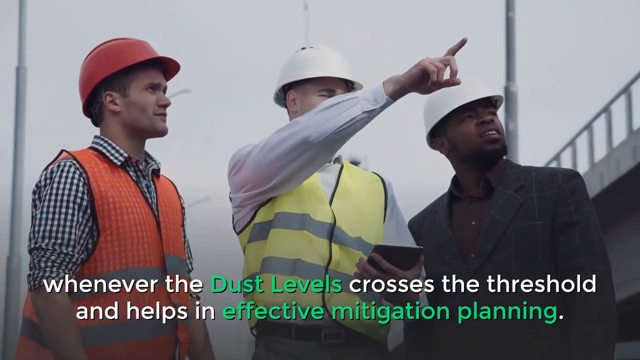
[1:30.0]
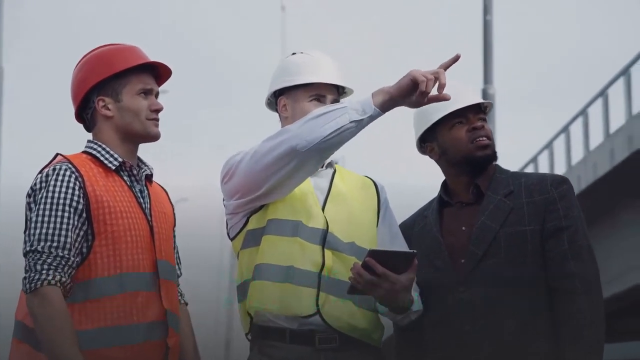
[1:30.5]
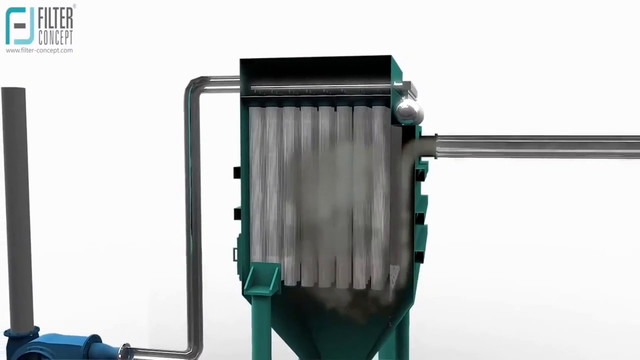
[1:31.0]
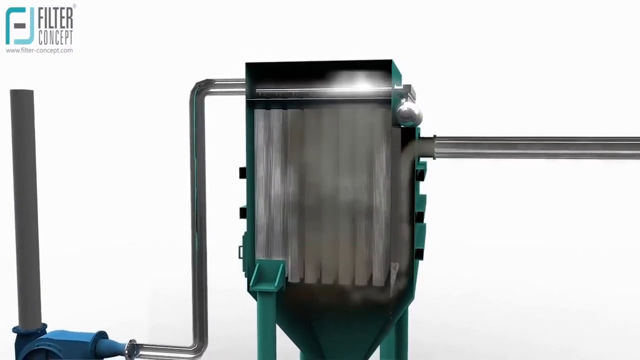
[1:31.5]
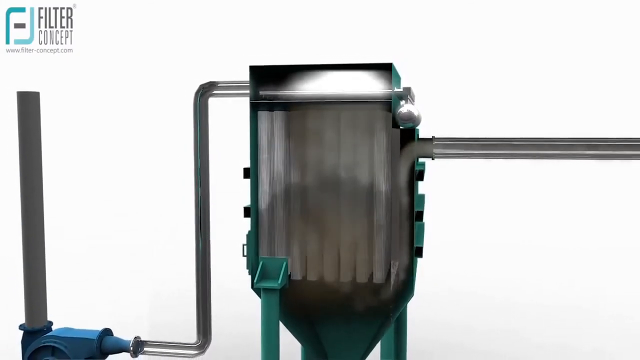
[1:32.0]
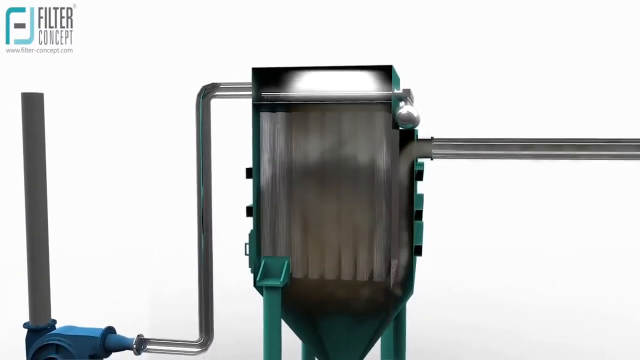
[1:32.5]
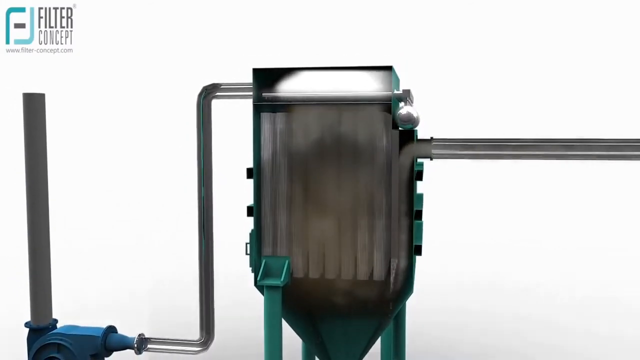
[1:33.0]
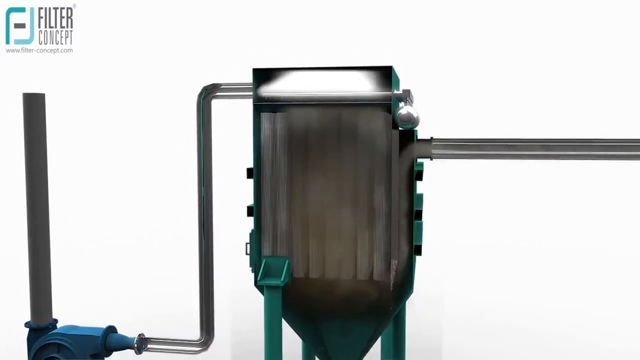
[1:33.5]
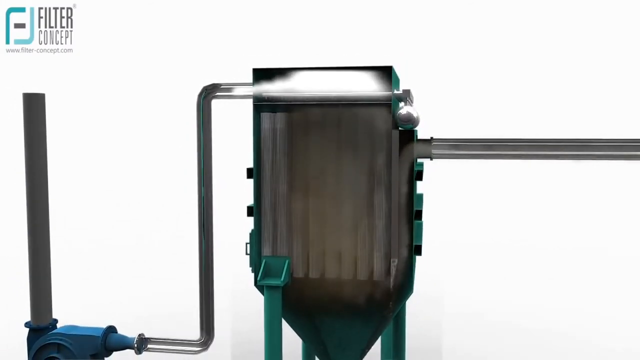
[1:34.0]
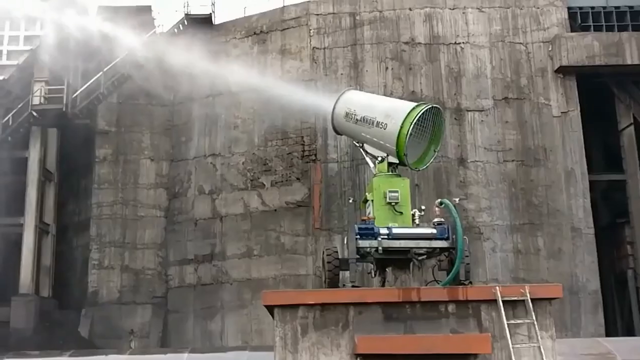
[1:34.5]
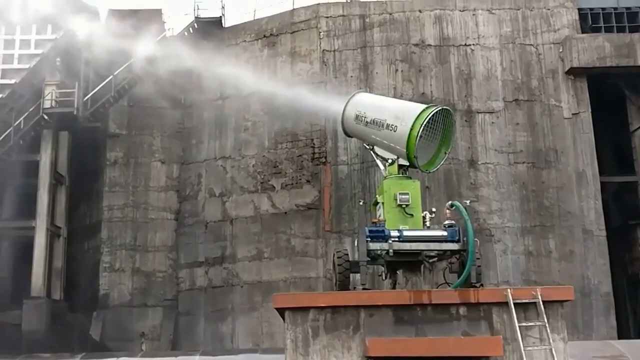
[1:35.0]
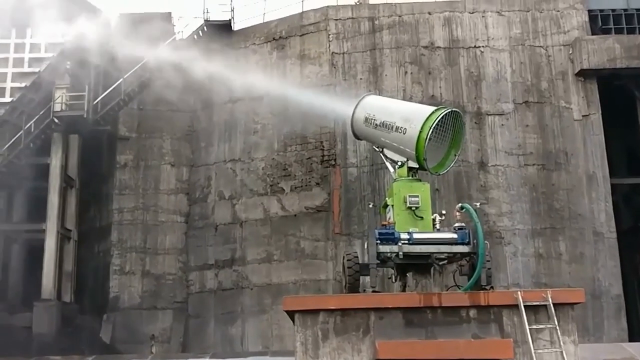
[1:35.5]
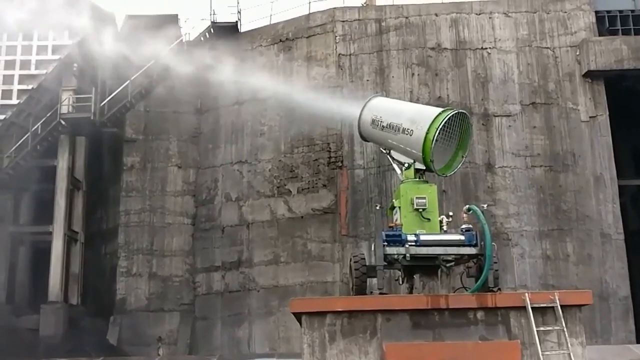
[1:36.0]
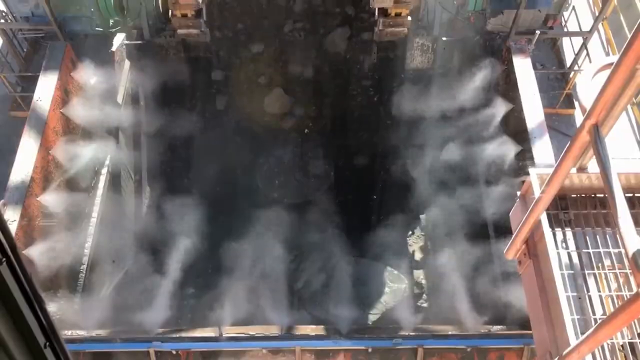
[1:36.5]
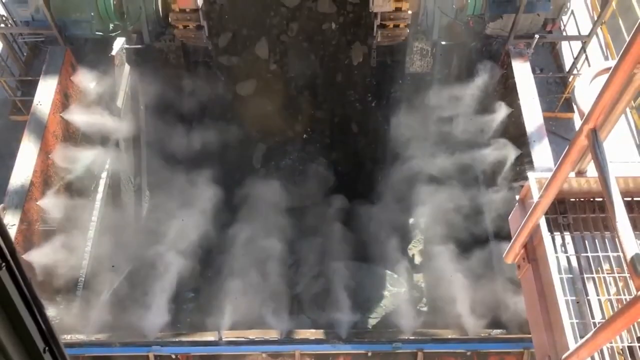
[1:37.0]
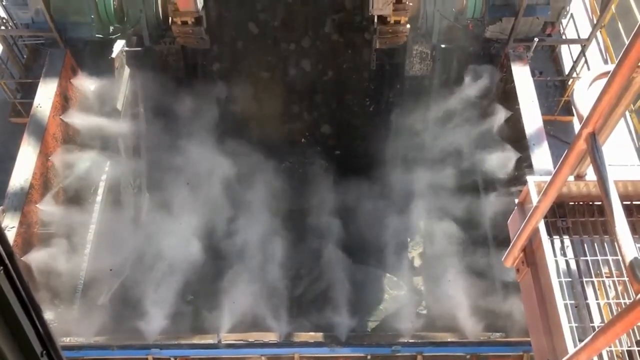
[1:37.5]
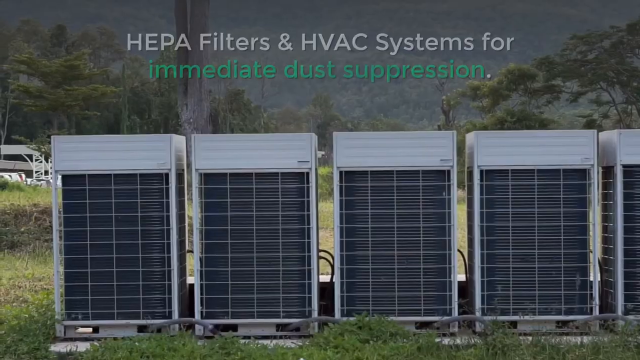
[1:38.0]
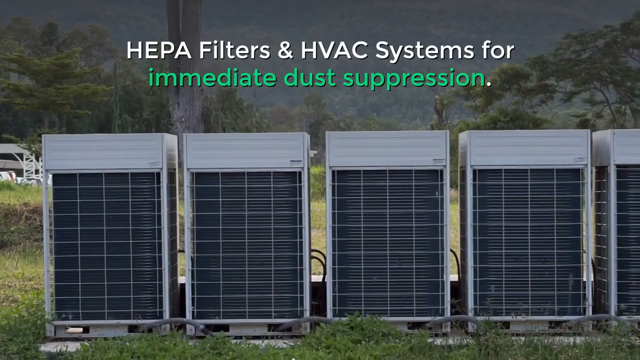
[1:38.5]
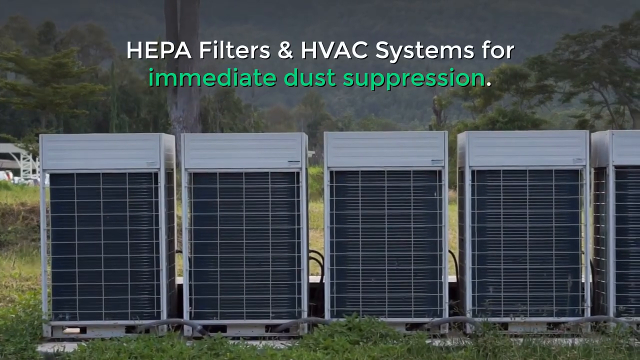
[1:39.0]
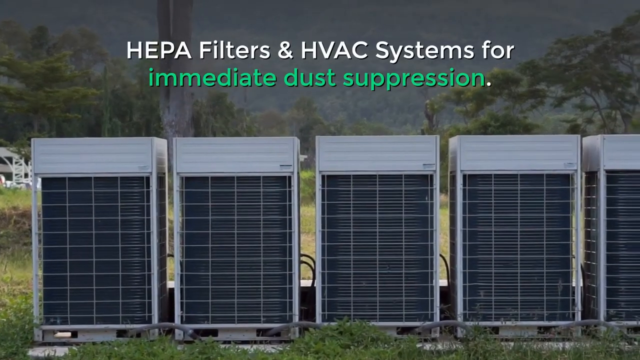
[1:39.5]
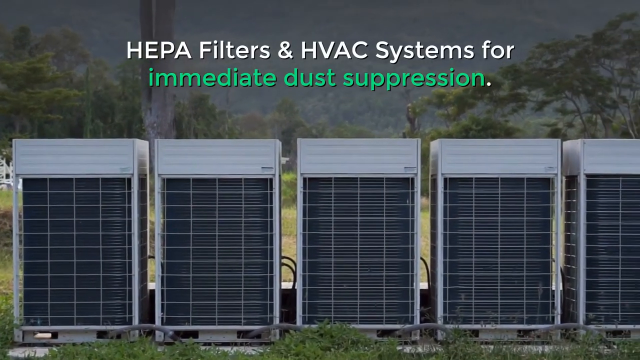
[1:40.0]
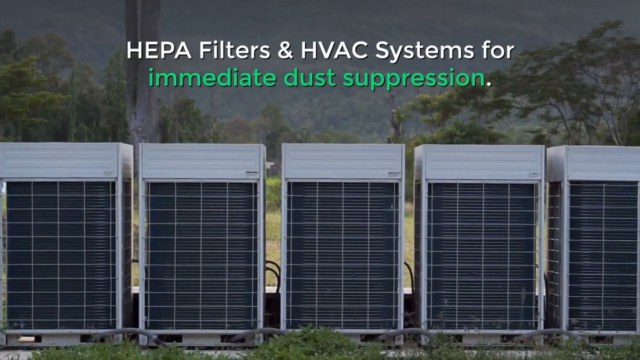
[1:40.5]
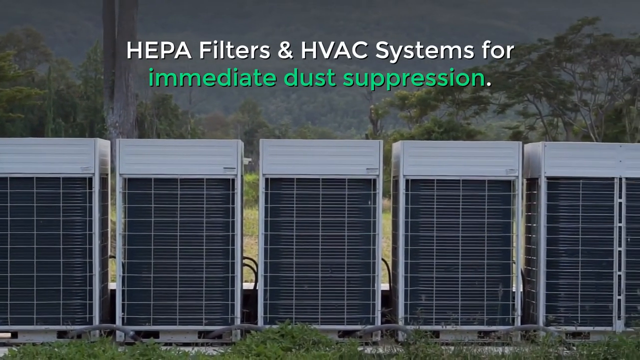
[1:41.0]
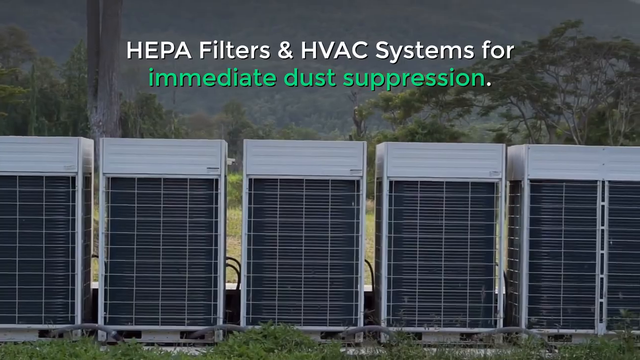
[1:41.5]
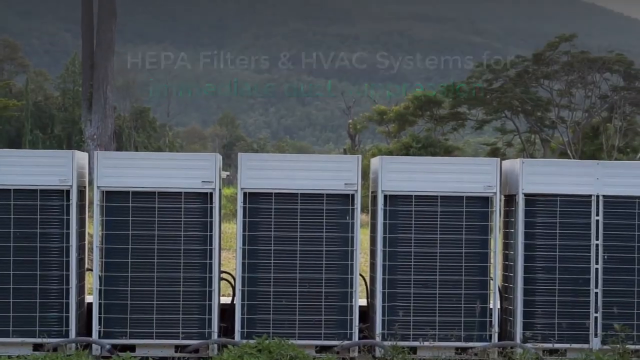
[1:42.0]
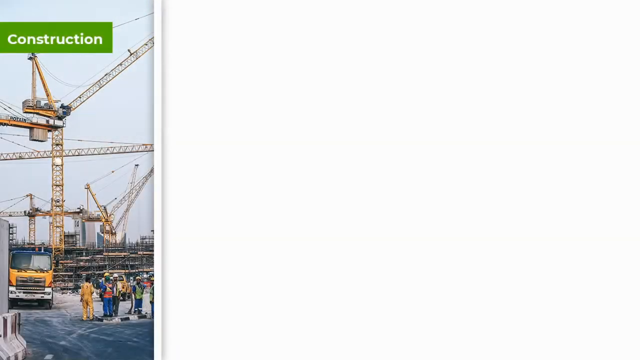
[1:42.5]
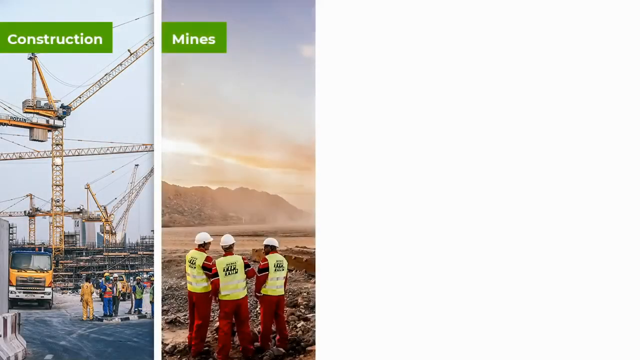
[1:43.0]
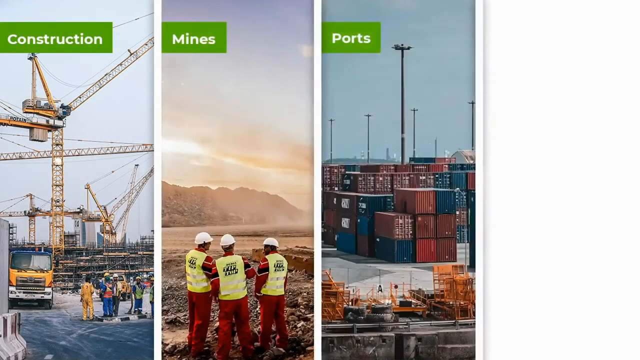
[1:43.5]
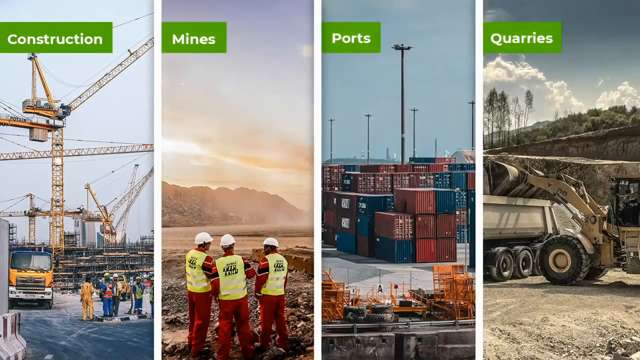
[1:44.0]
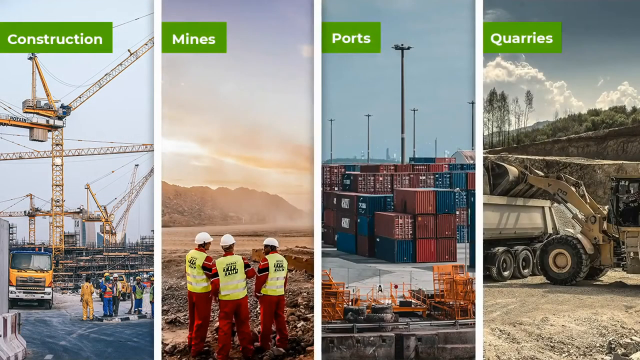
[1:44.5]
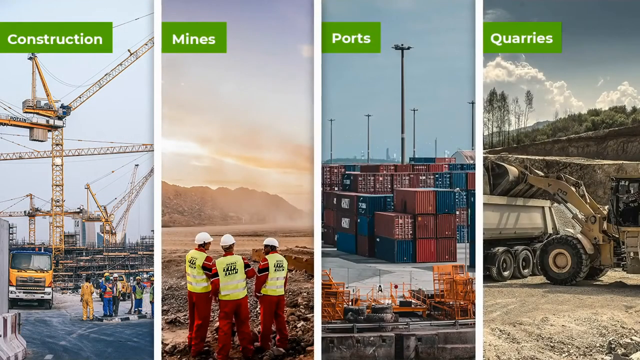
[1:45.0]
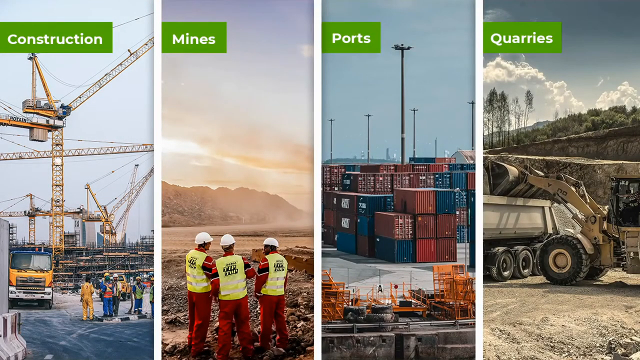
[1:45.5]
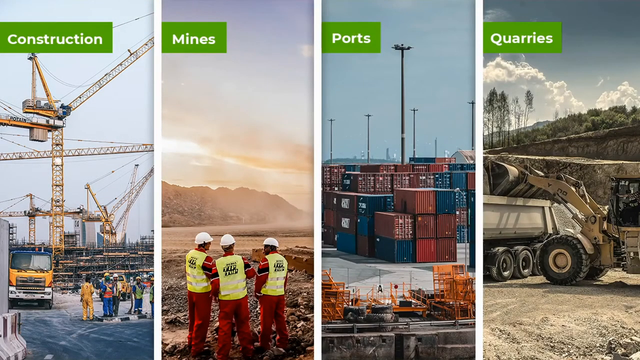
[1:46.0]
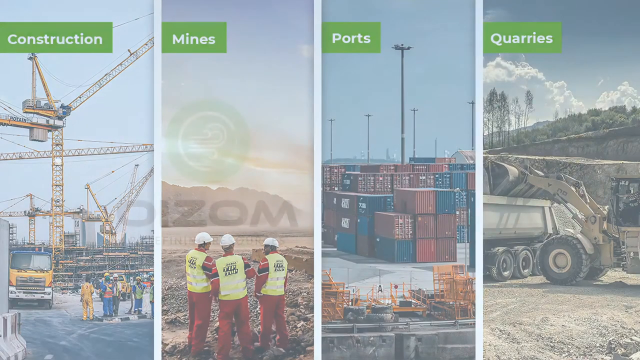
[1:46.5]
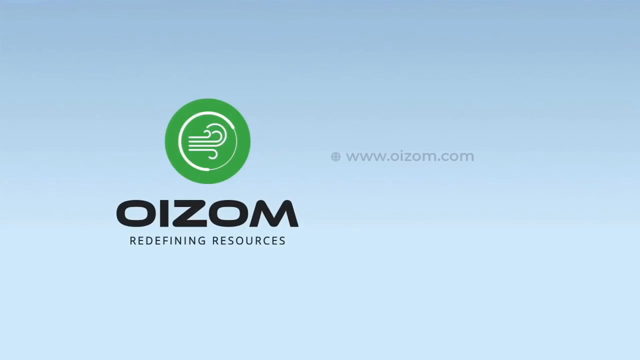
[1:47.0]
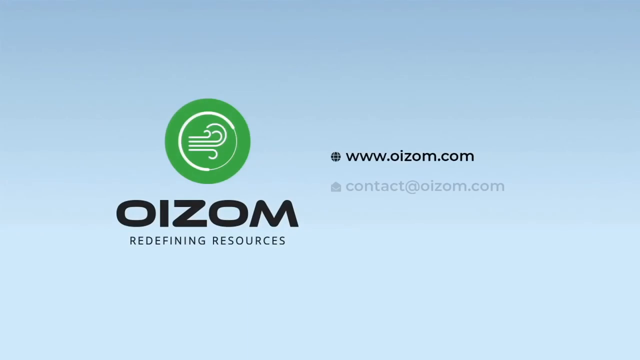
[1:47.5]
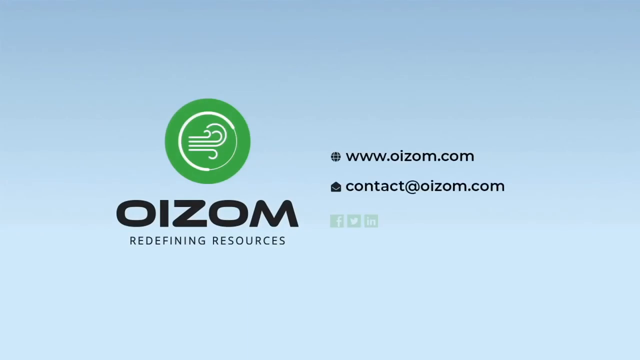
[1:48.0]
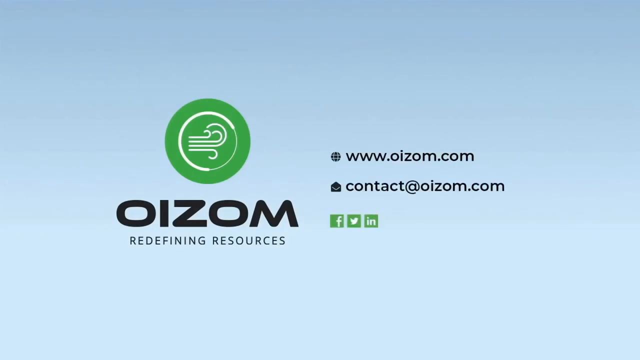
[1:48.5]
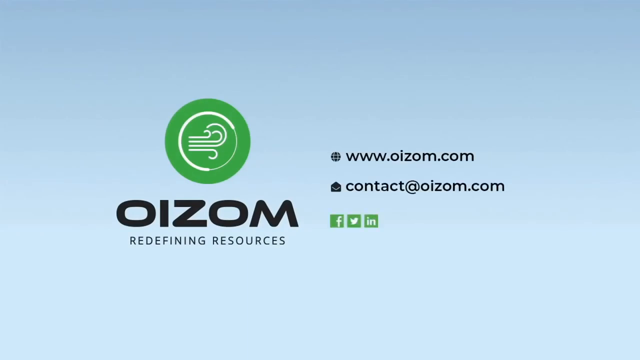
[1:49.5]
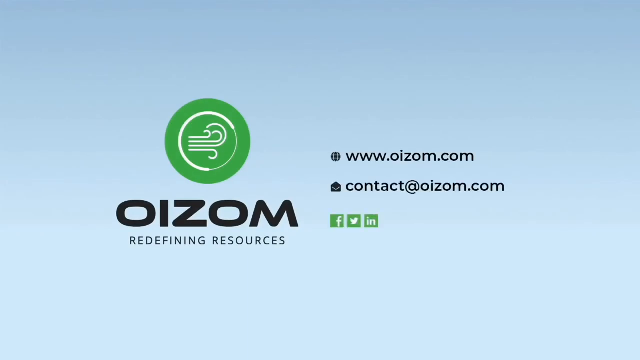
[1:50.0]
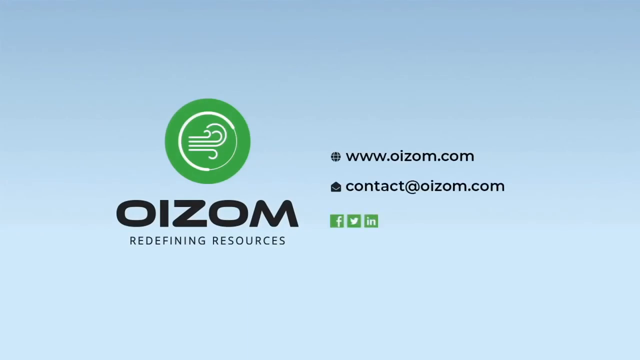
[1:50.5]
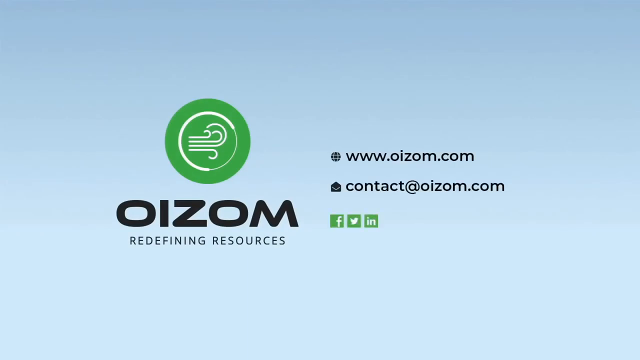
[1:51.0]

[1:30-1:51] Three men, most likely on a construction site, all wear hard hats; one is in a suit and the other two are in reflective vests of different colors. The middle man points at something while the other two look. At the bottom of the screen it reads 'whenever the dust levels crosses the threshold and helps in effective mitigation planning'. The video cuts to a drawing of some sort of device that looks like it has a pipe running into and out of it, with material moving through the pipes and spilling out in other areas. Next is a shot of an actual device outside, maybe on a construction site, that appears to be jettisoning some sort of material into the air; it could be water, but it looks like something fairly light and misty. Then, inside a machine, several misters seem to shoot mist onto materials going down a conveyor belt, most likely to reduce dust levels. Several machines outside look like some sort of filtering machines, with a title above them reading 'HEPA filters and HVAC systems for immediate dust suppression'. The screen then divides into four parts, construction, mines, ports, and quarries, each with its own image: construction looks like it has large towering machines to build buildings, mines shows three men in reflective vests standing around near a mountain, ports shows a lot of cargo boxes, and quarries shows heavy equipment moving material. Finally, a logo screen reads 'Oizom Redefining Resources', followed by the URL 'www.oizom.com', an email reading 'contact at oizom.com', and three logos for Facebook, Twitter, and LinkedIn.